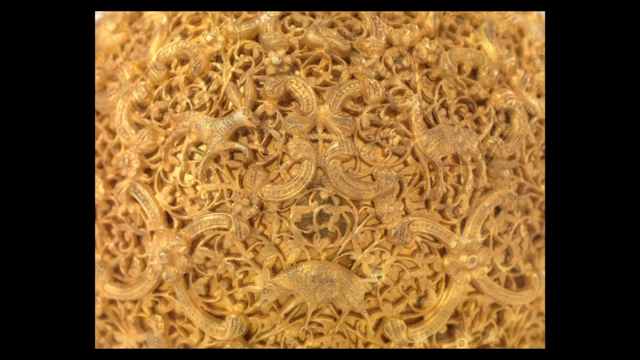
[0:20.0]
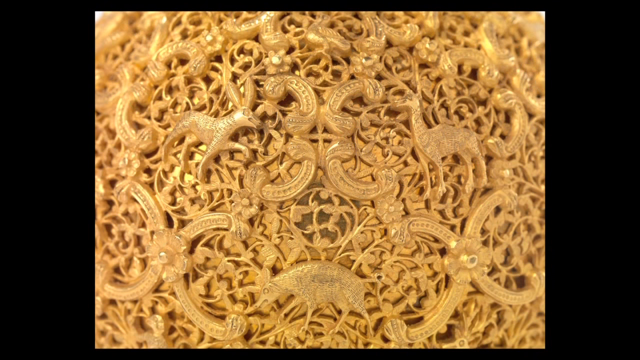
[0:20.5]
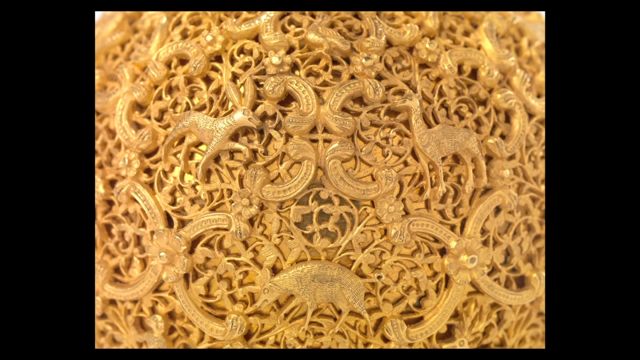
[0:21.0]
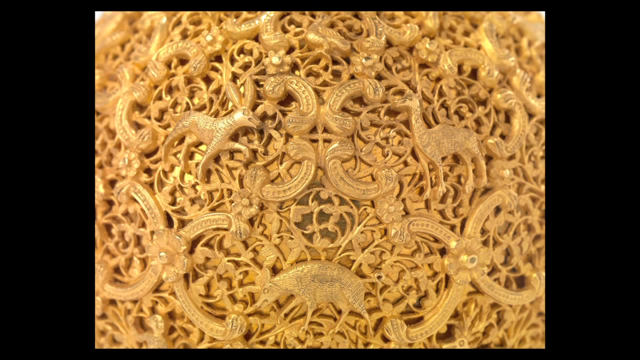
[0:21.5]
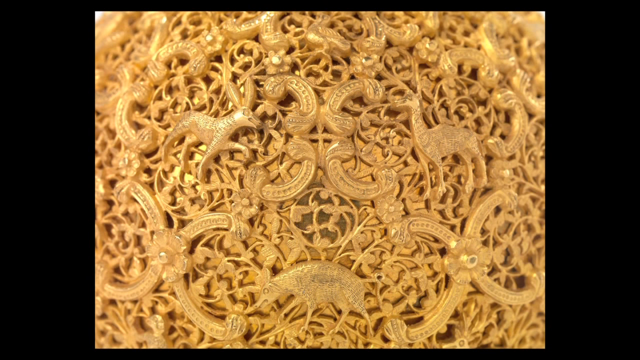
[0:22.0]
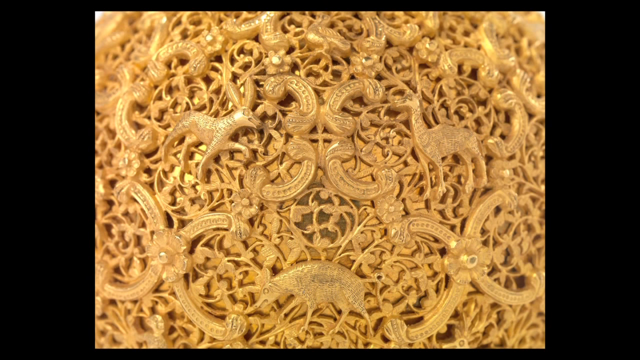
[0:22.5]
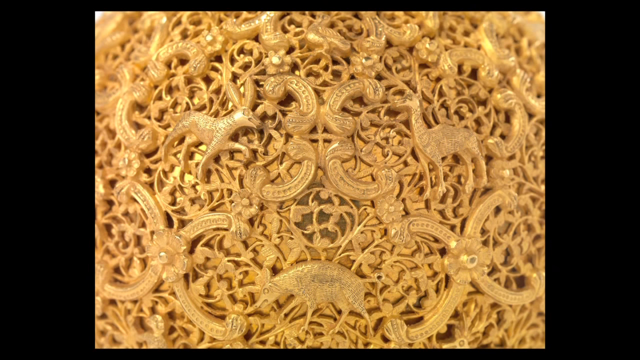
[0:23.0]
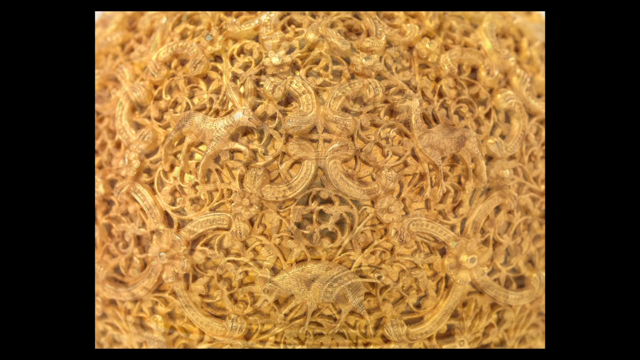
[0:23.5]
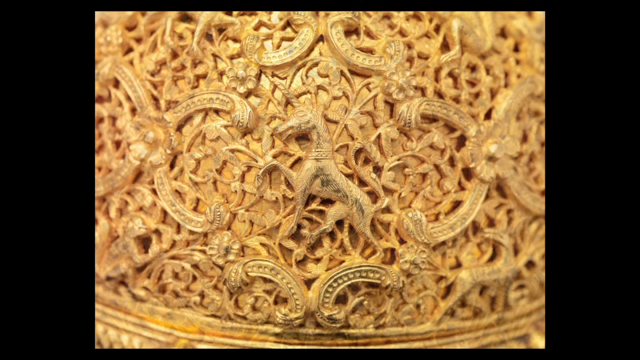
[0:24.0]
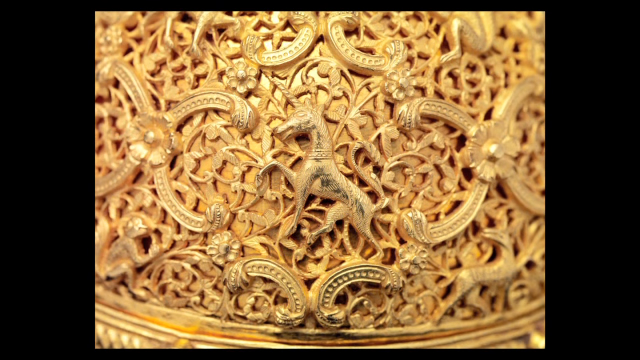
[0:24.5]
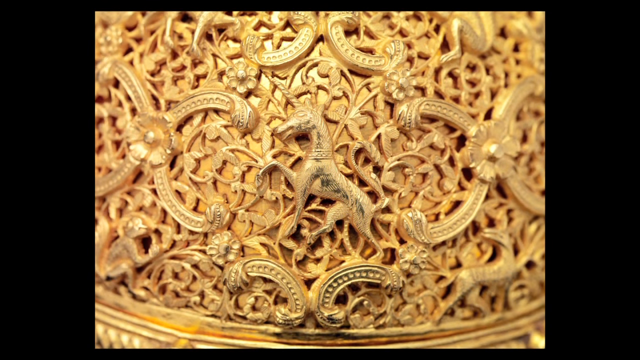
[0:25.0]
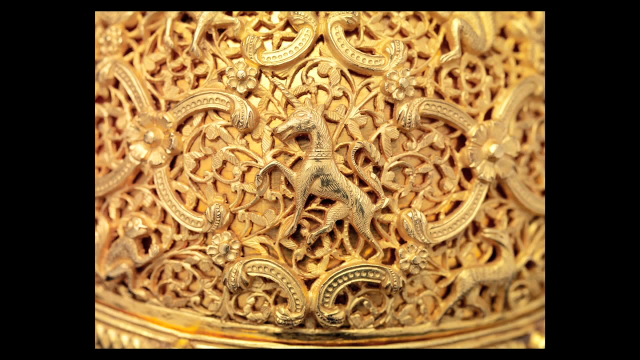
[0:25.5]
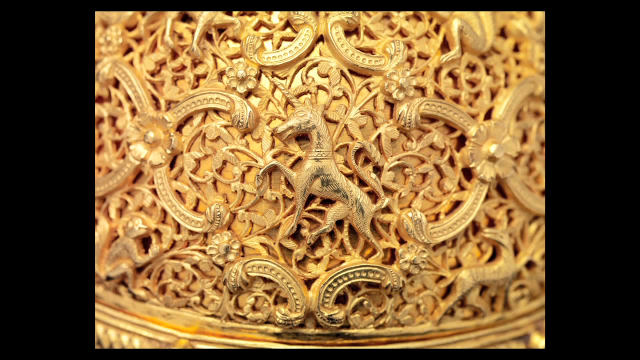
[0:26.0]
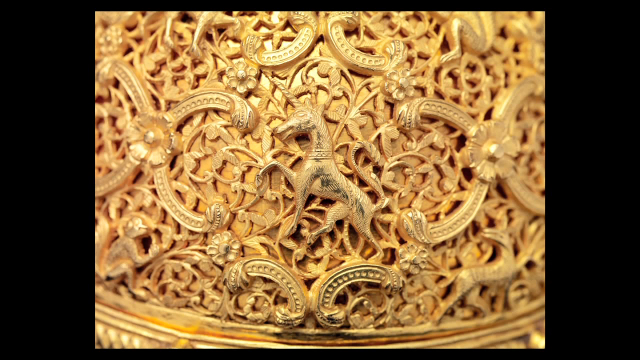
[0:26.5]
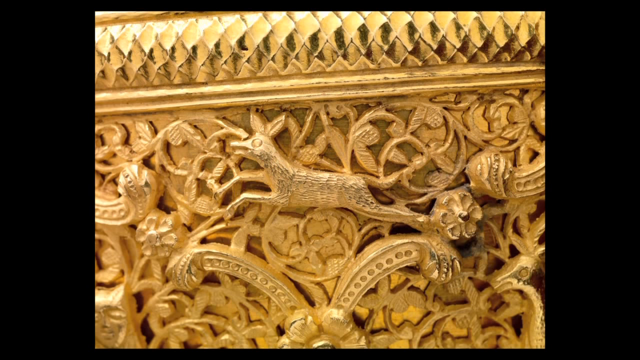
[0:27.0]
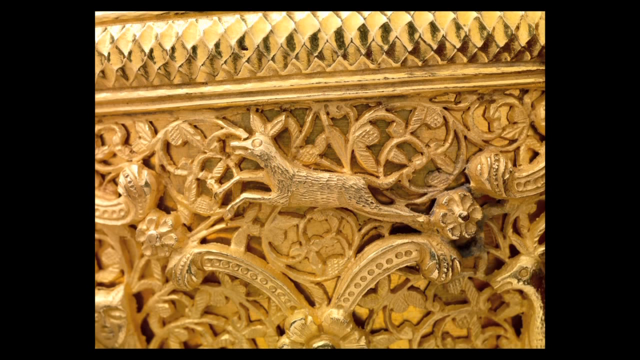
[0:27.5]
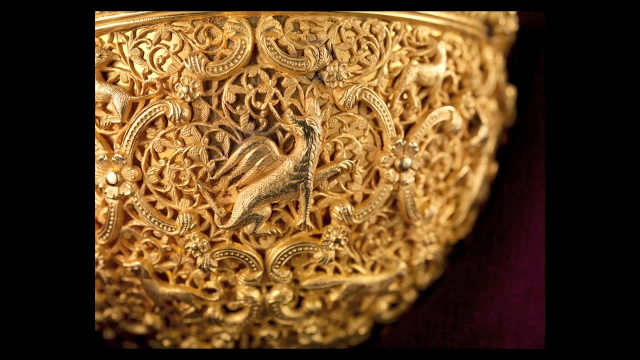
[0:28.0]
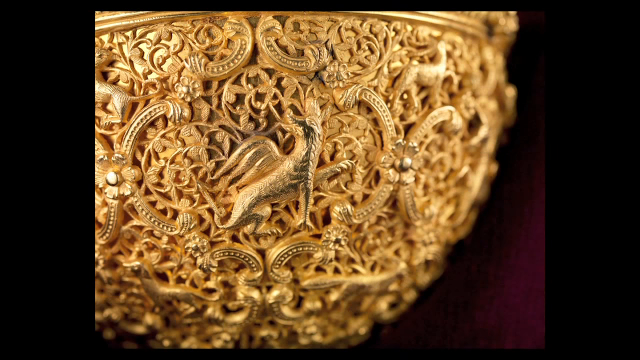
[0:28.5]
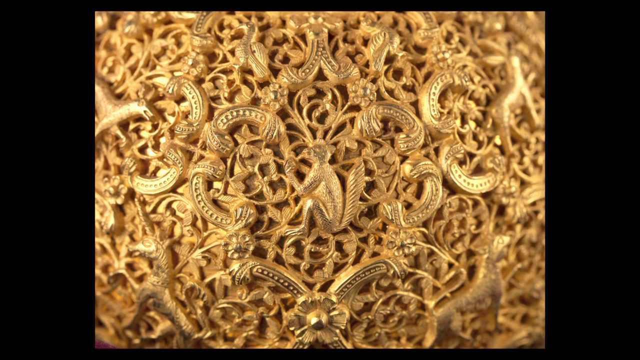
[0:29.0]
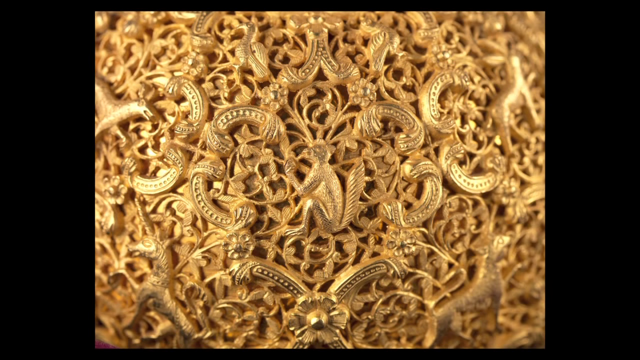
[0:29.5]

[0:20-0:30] A very expensive-looking jewel covered in gold is shown; it seems like a basket or something for putting belongings in. The camera gives different views of it, showing the patterns more closely. Various animals appear within the pattern, such as dogs, horses, birds, cats, giraffes and monkeys. The jewel is standing on a maroon type of blanket.